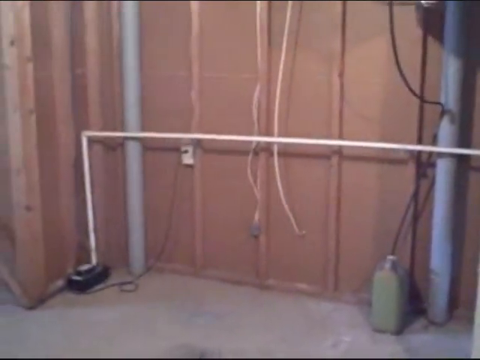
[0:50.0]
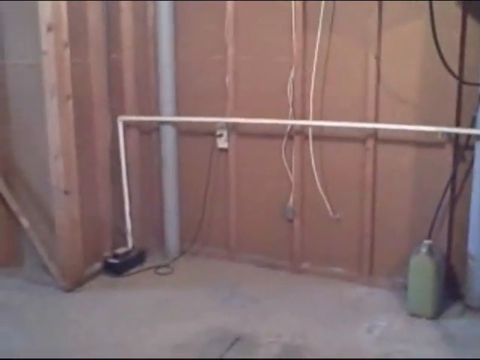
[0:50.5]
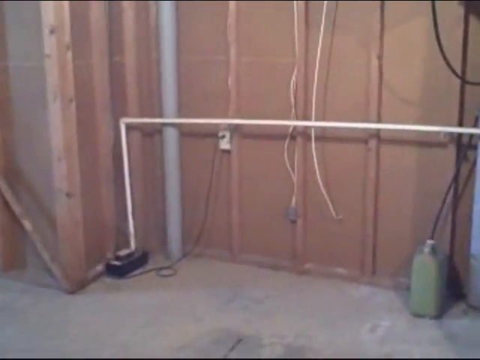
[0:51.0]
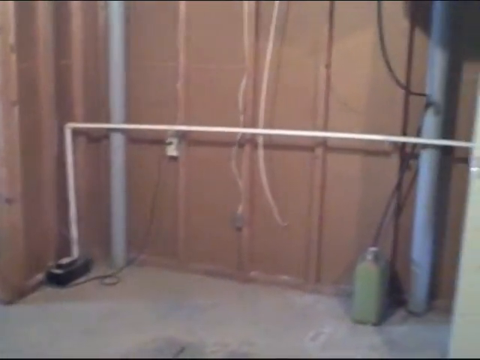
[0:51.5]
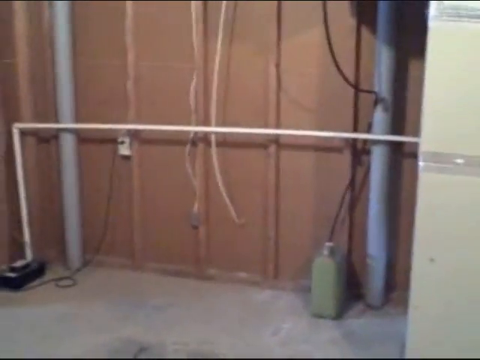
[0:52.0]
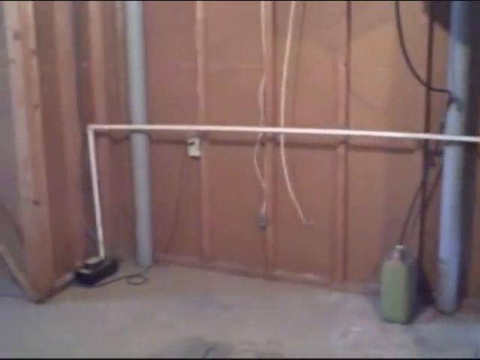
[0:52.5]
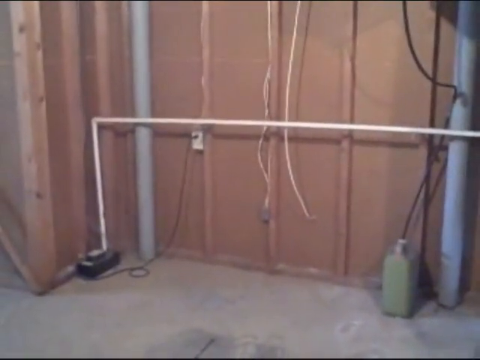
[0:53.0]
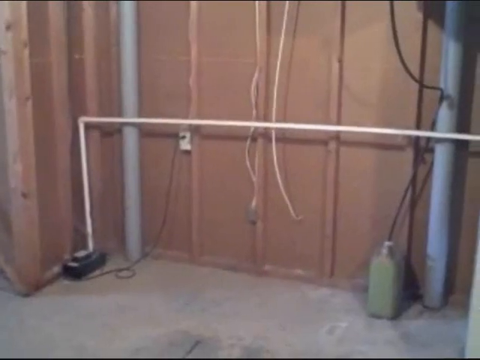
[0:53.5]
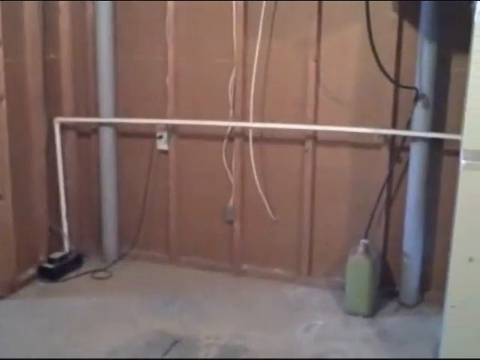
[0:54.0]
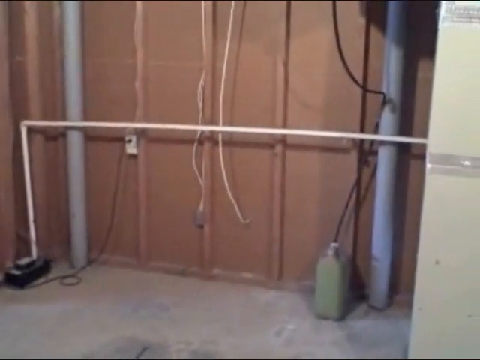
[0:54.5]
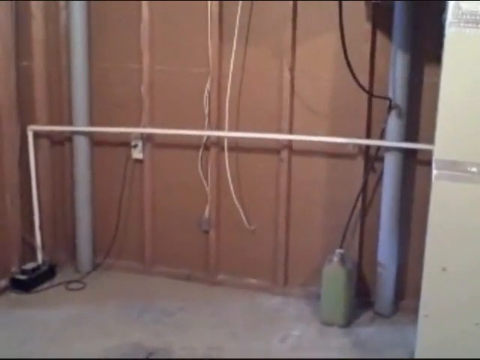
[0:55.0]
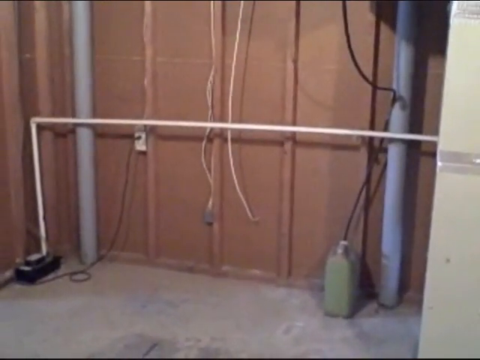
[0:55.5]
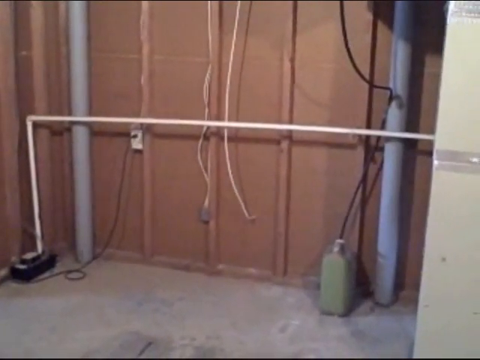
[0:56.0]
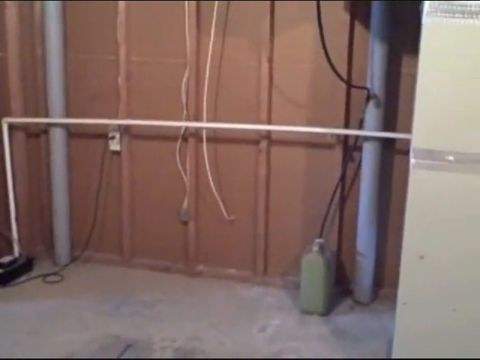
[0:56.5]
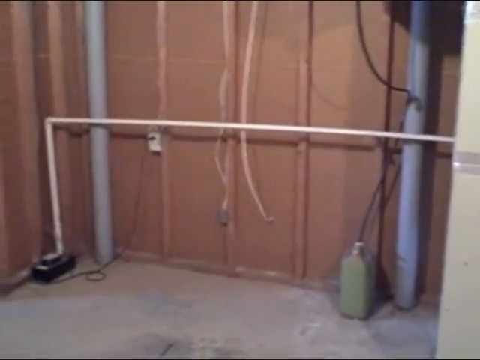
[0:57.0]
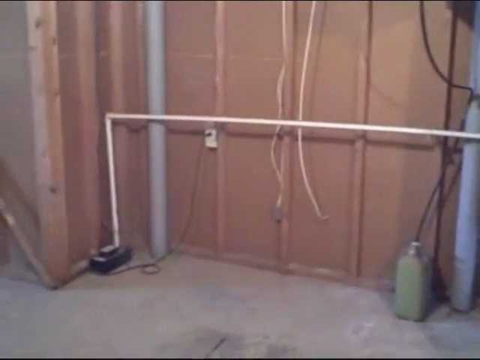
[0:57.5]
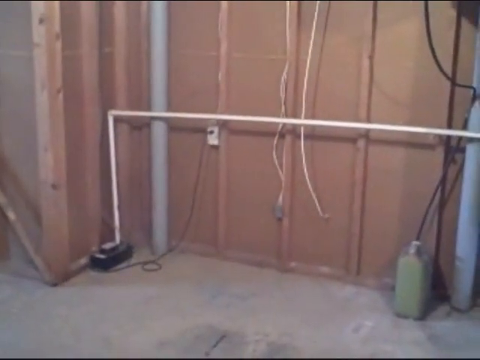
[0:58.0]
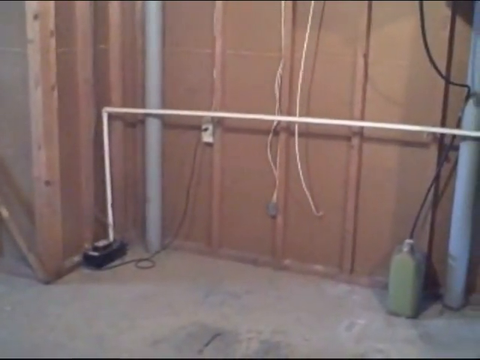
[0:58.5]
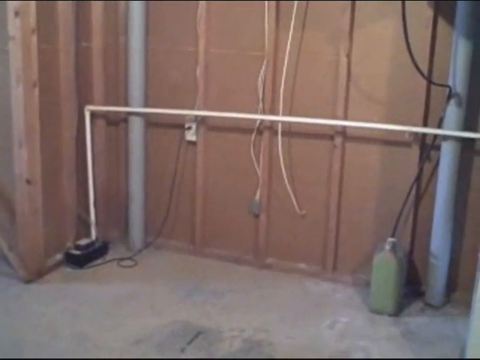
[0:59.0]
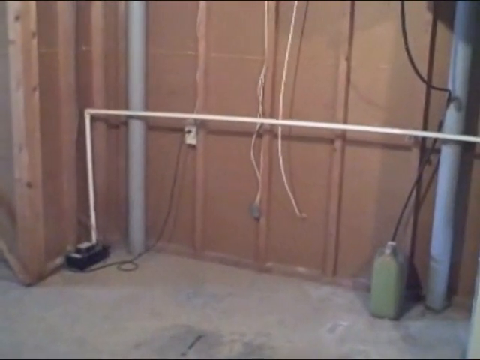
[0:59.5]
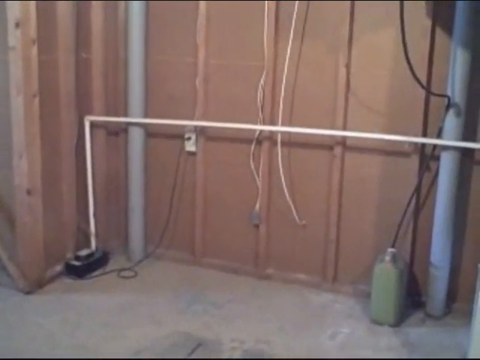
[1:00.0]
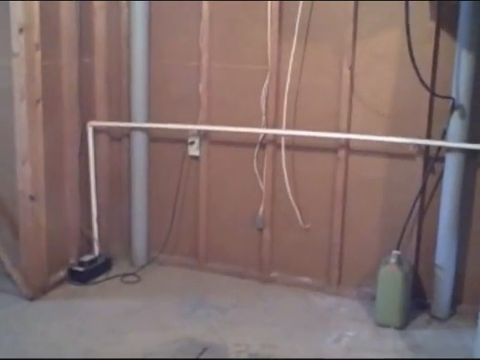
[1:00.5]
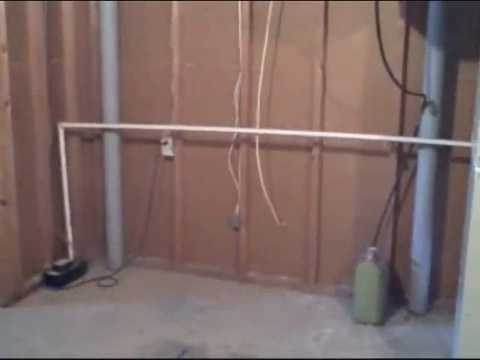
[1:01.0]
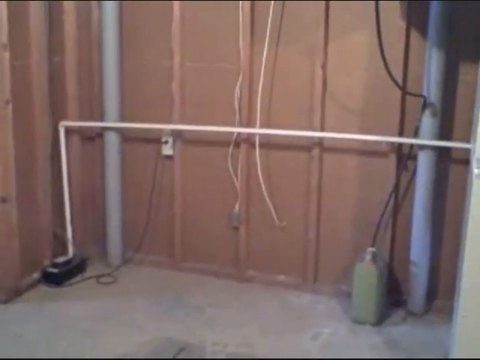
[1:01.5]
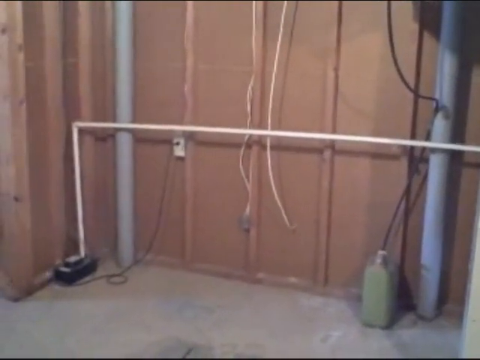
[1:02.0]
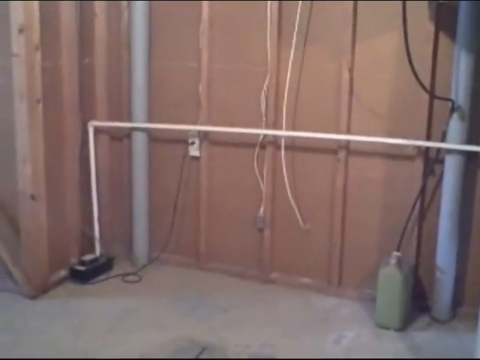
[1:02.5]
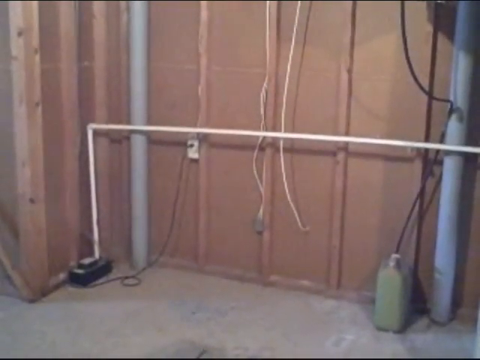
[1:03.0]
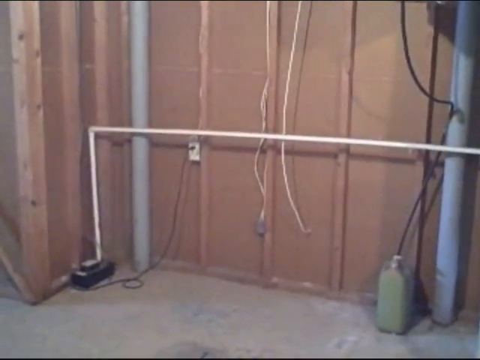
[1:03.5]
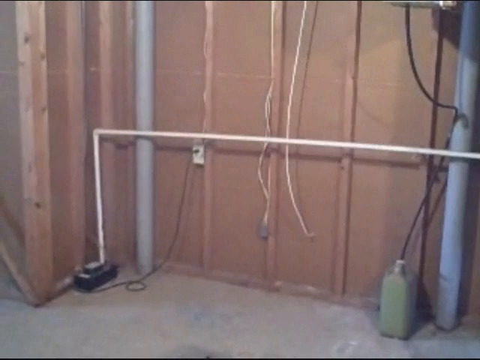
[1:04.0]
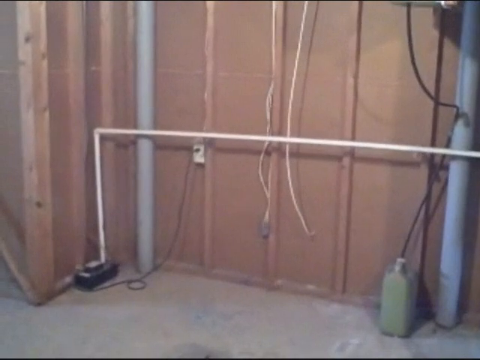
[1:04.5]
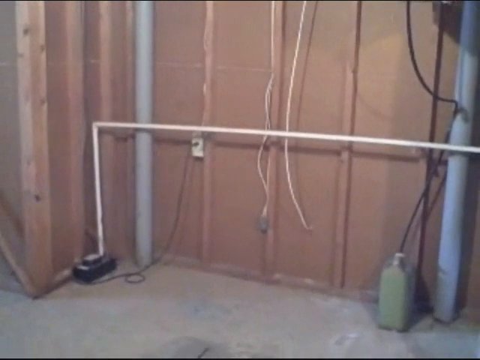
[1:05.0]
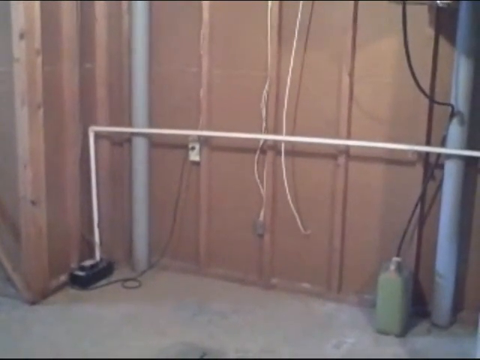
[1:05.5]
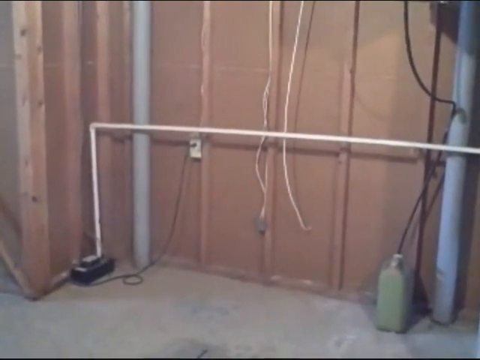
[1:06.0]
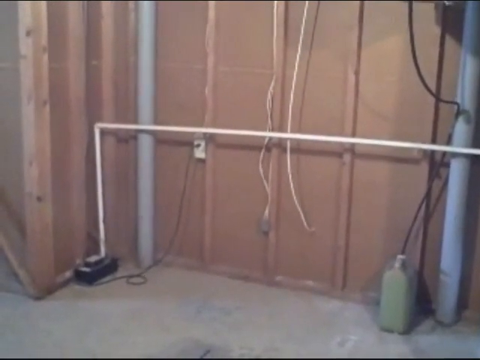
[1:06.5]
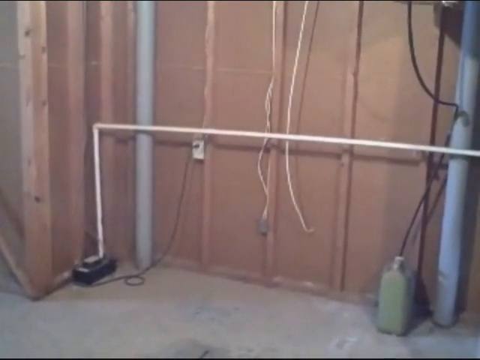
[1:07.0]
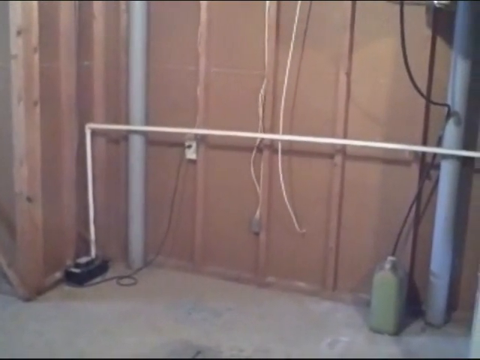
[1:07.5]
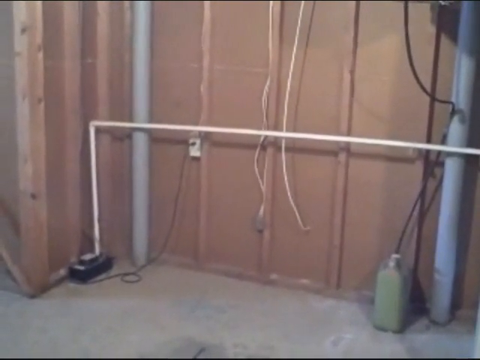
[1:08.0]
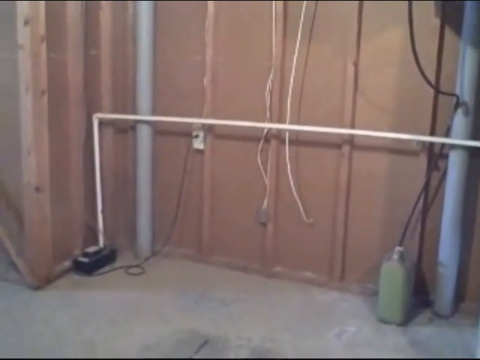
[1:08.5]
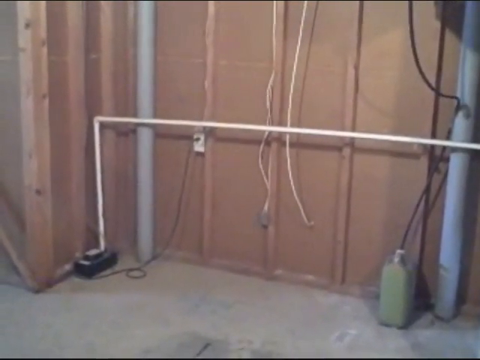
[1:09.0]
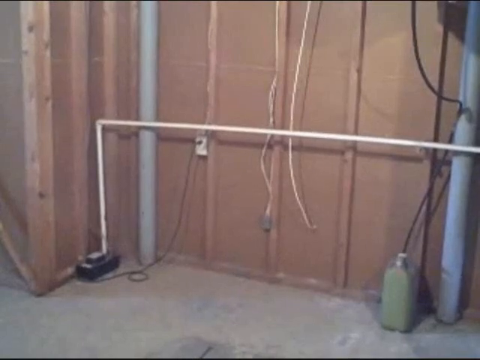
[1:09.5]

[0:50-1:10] A person films a shaking video in a room with hanging wires and a green box. There is a white plug and a white hoop going sideways to the right, with brown boxes on the right side, a red-looking front wall with a door on the side, and flooring that looks grey. The green box has a cable connecting to something. Something hangs with two red holes, which looks like it may be air ventilation or something holding the structure of the room. The person filming seems to be showing the front of the room, shaking the camera somewhat violently, to show what the room looks like.